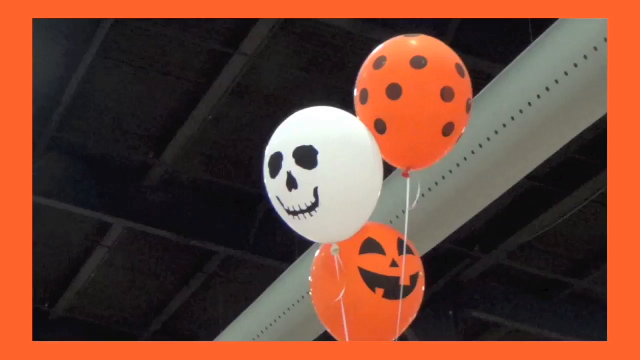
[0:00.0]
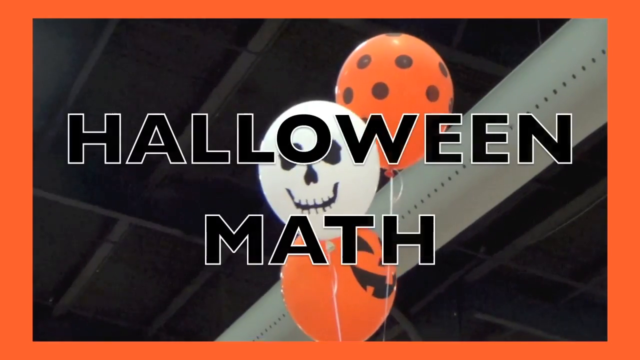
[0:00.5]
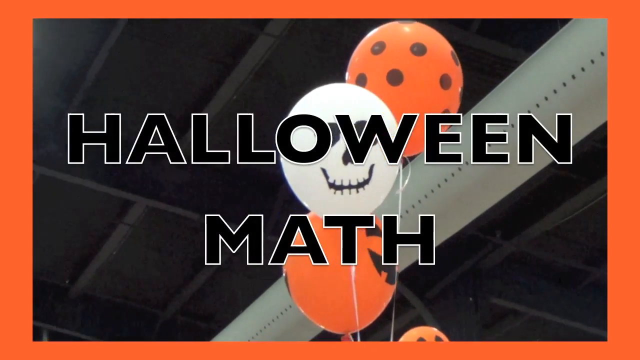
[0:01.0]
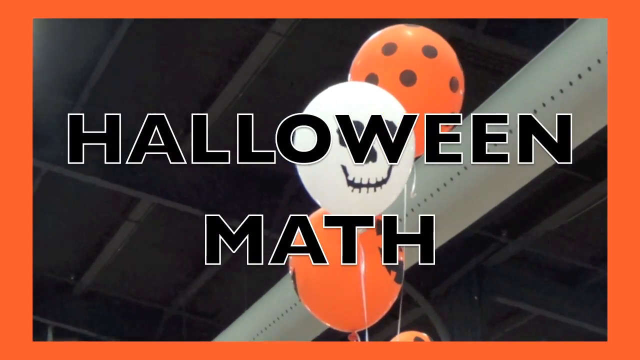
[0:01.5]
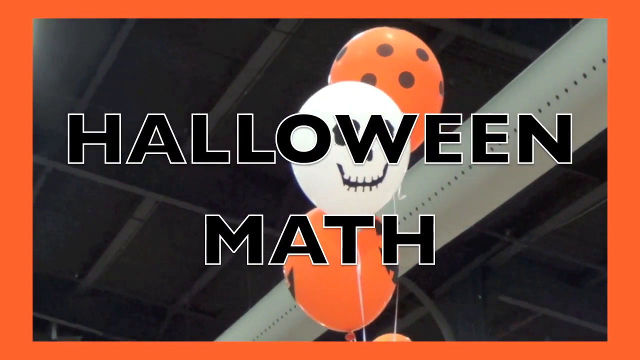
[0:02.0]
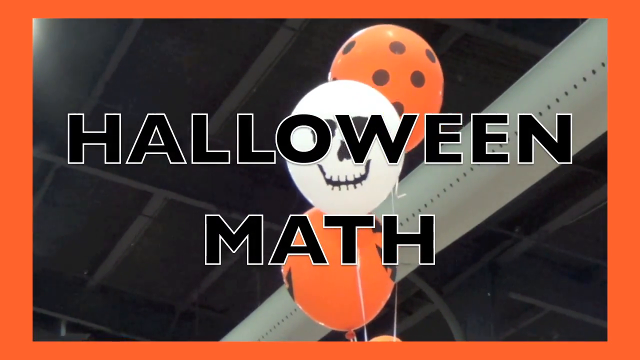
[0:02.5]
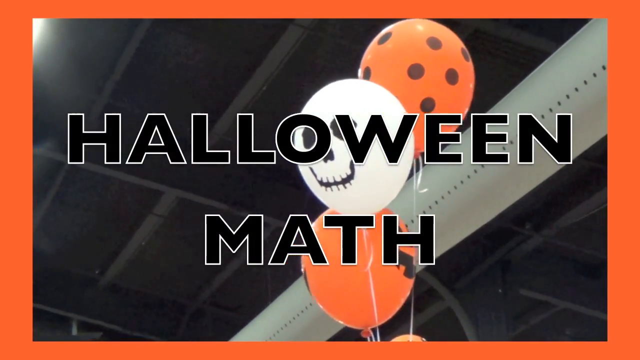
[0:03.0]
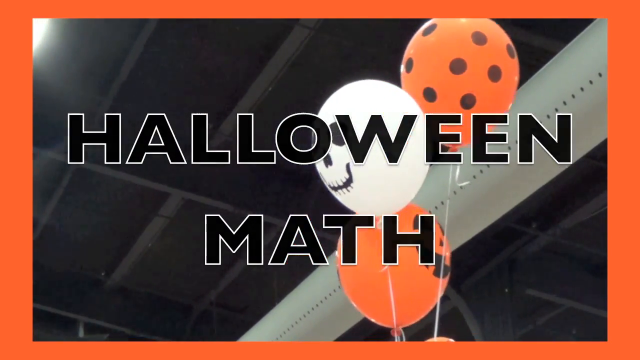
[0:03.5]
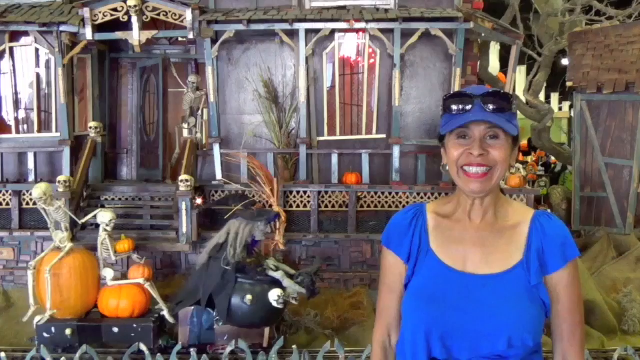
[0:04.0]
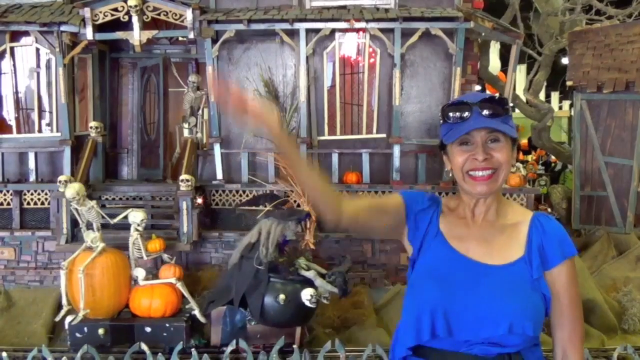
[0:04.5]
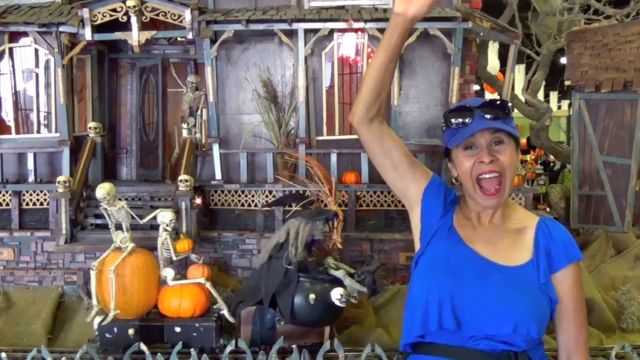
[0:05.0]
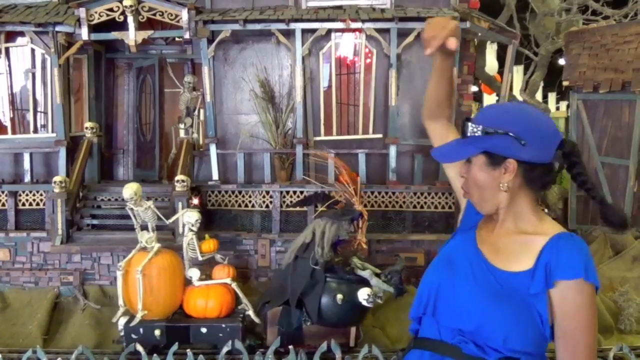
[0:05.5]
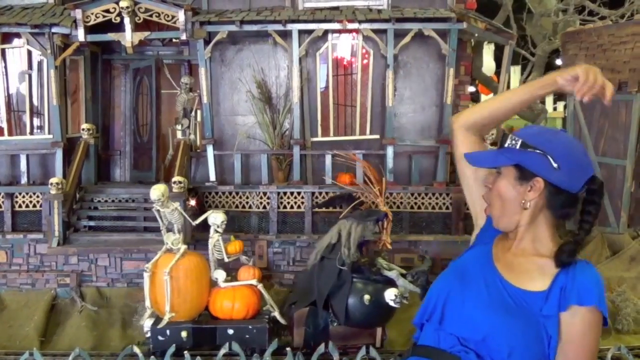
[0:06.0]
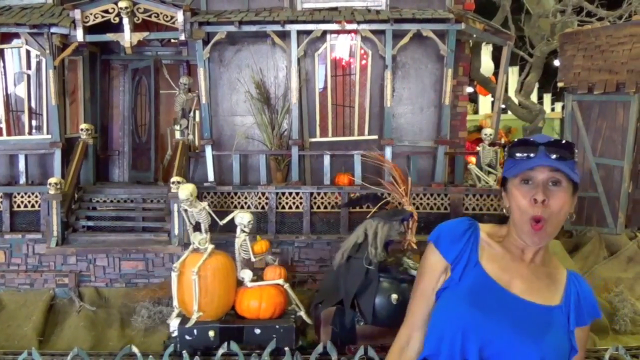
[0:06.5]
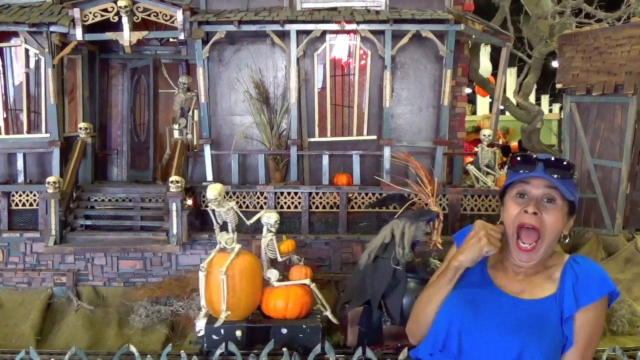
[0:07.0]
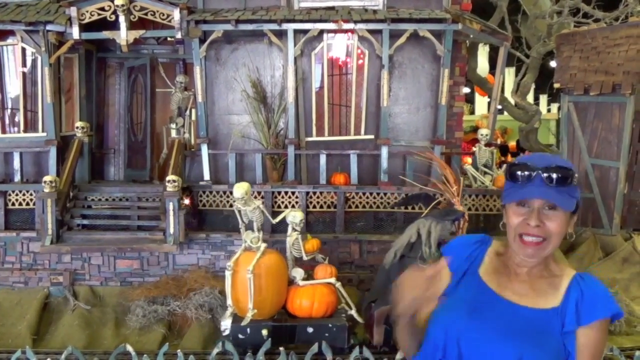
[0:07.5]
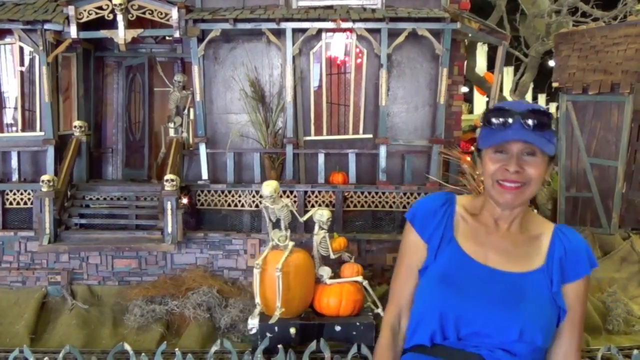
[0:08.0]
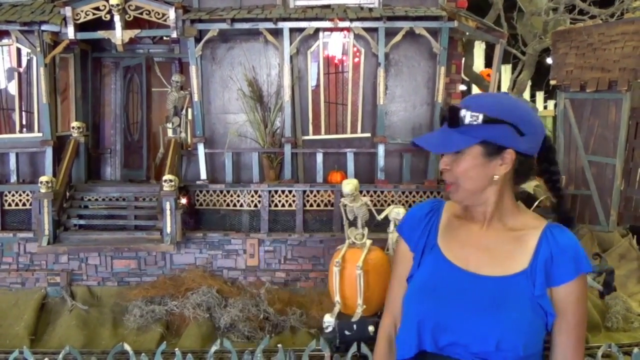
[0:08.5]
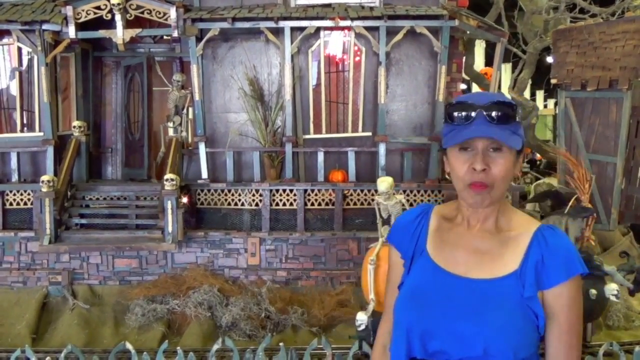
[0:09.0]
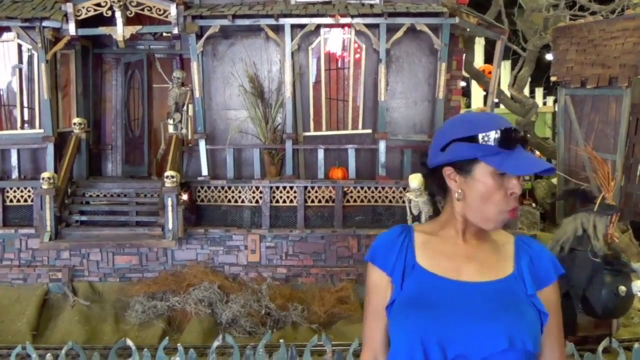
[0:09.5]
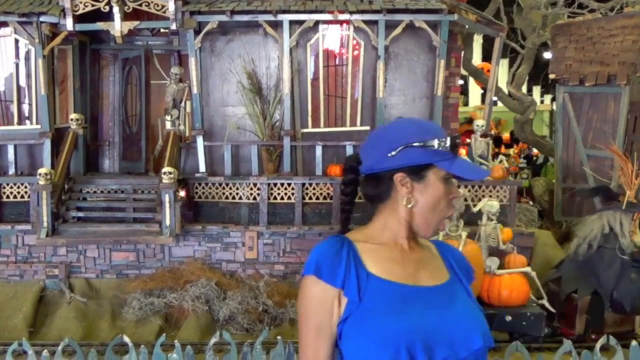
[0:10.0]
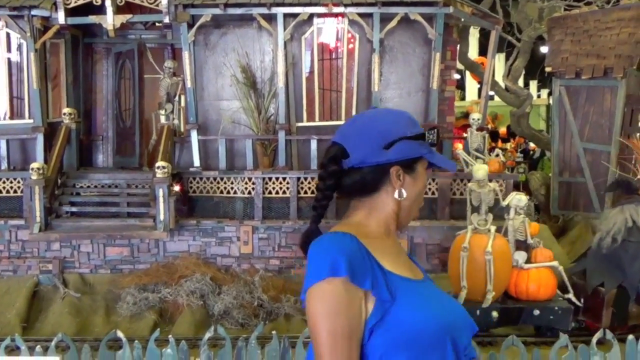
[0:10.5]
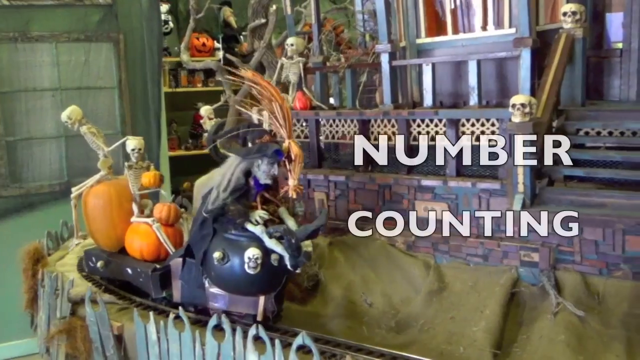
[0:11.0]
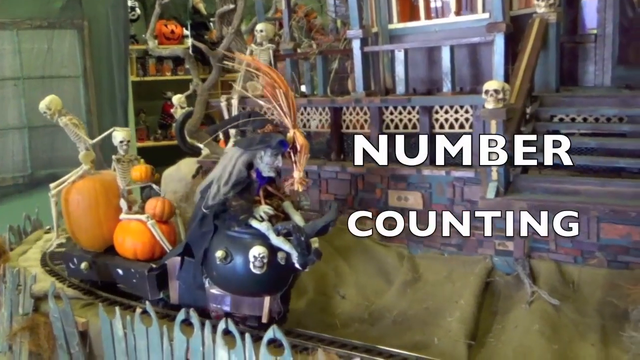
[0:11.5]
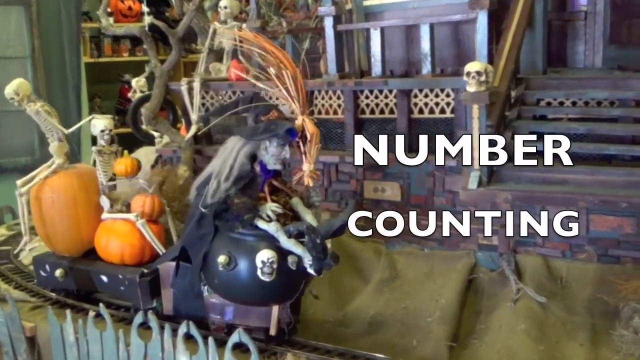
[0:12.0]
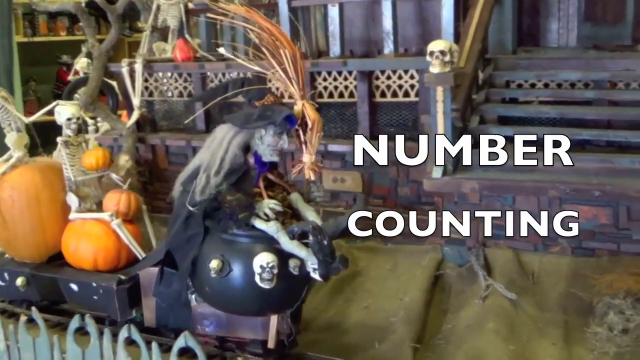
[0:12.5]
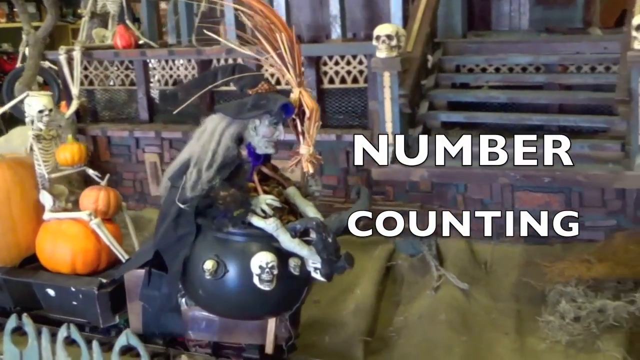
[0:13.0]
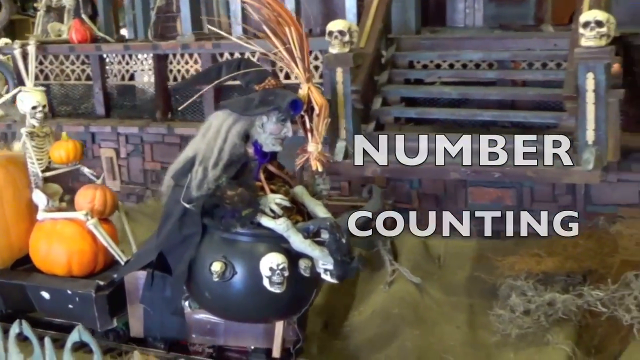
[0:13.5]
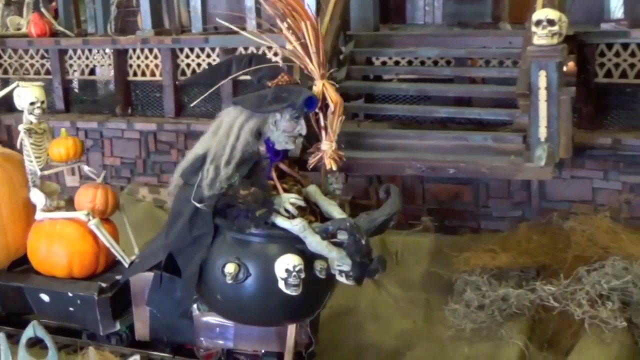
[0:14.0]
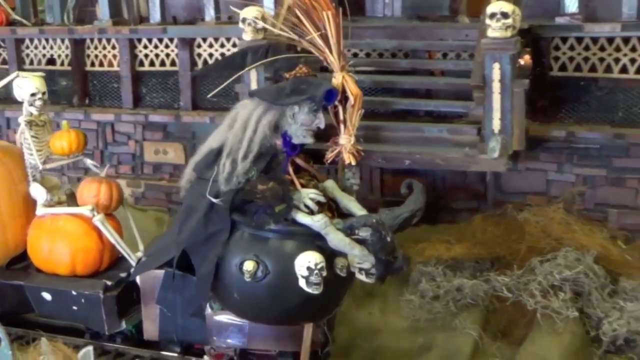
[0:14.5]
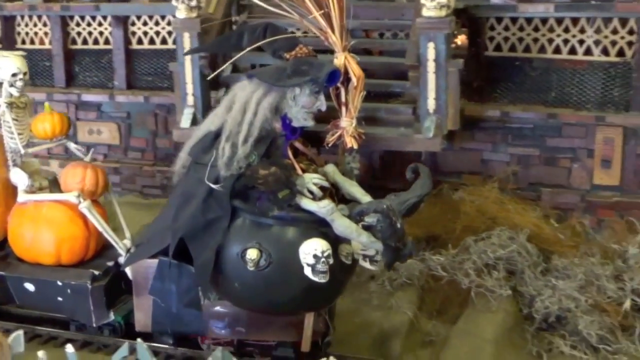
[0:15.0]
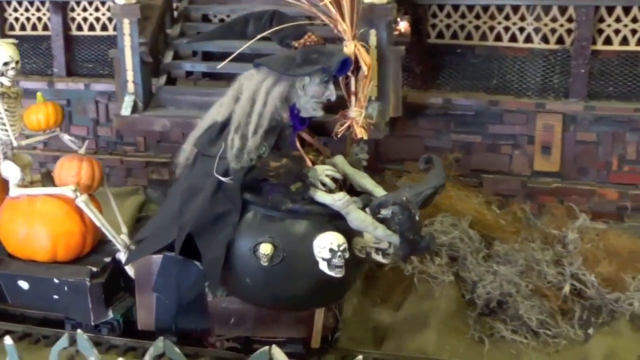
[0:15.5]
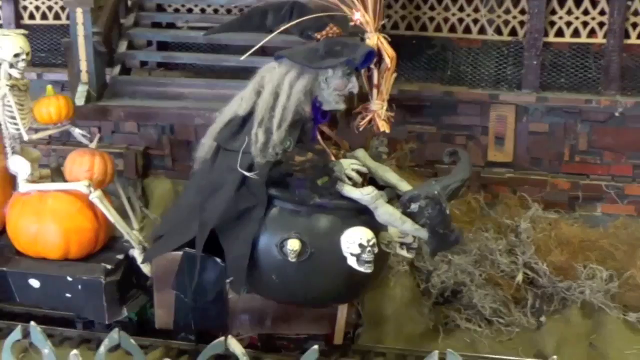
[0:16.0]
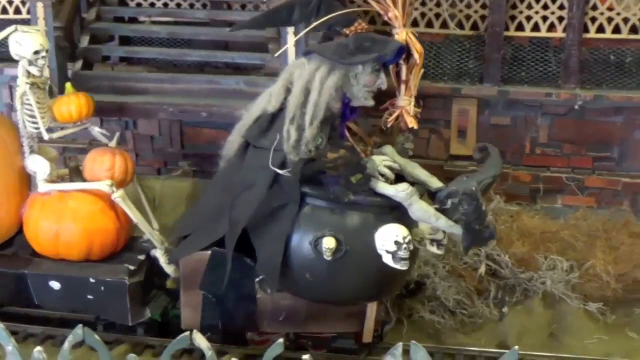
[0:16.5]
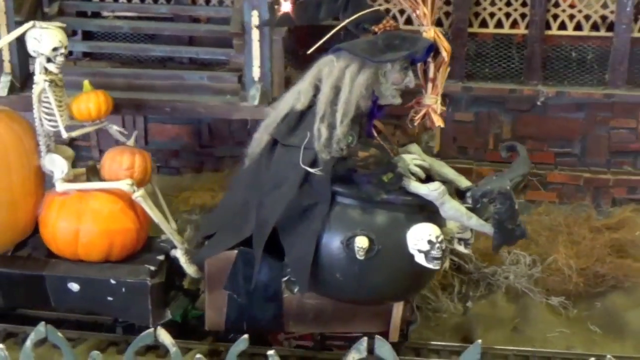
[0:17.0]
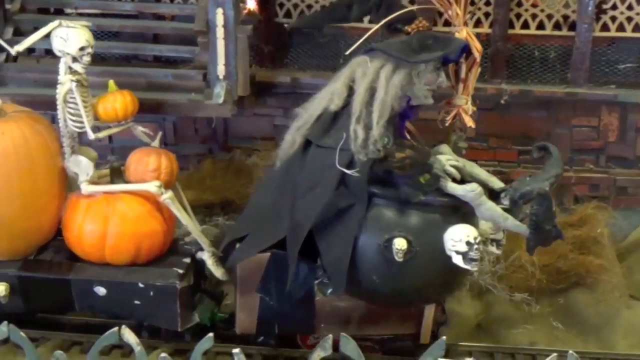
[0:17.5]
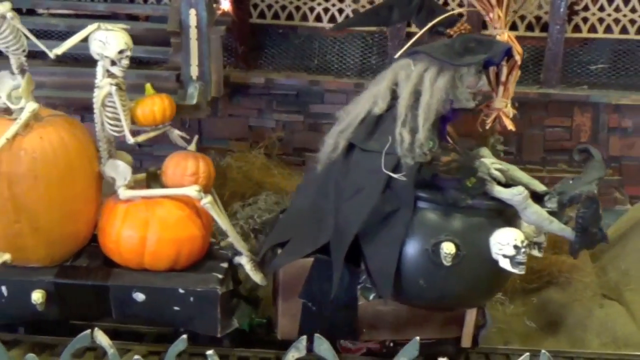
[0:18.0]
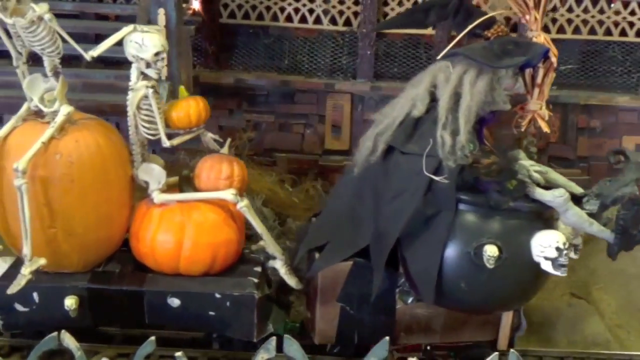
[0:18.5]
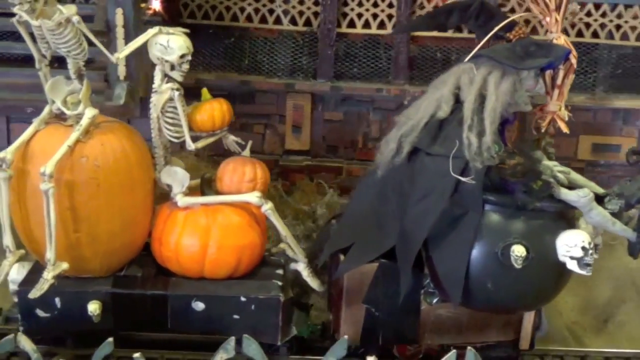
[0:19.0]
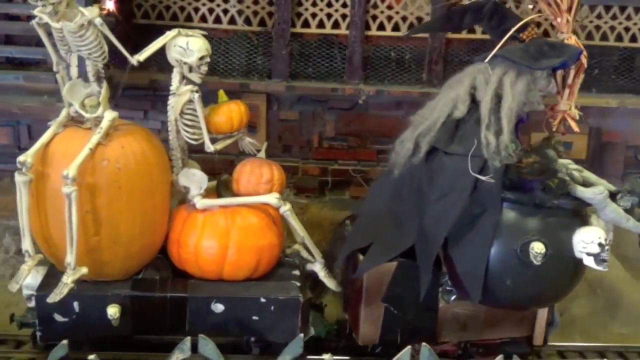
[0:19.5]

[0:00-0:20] The video begins with some Halloween balloons: a white balloon with black eyes, a nose and a mouth that make it look like a skull, an orange balloon with black polka dots, and another orange balloon with a jack-o-lantern face. The text "Halloween math" in black is overlaid on them, and the balloons are slightly swaying. Next, a woman in a blue blouse appears, wearing a blue baseball cap with sunglasses on top of her hat. Her left arm is down at her side, and she holds her right hand up in the air above her head, kind of waving. She then points down at what looks like a Halloween train going by behind her. The train appears to be driven by a witch, and on the back car are two yellow pumpkins with a skeleton sitting on top. She makes funny facial expressions at the camera as she looks back at the passing train. White text on the screen then reads "number counting." The train is a witch train: at its head is a cauldron with a witch sitting on it, her feet sticking out forward, and it moves along a track in front of what looks like the porch of a haunted mansion.